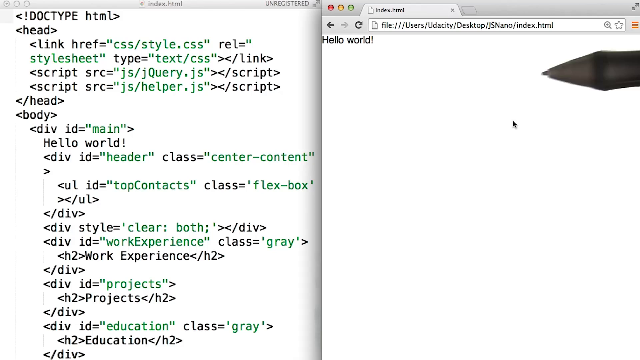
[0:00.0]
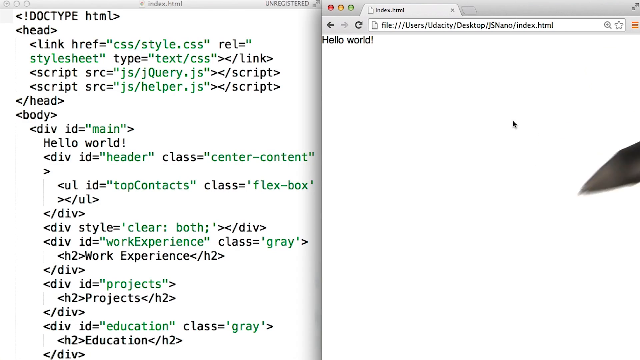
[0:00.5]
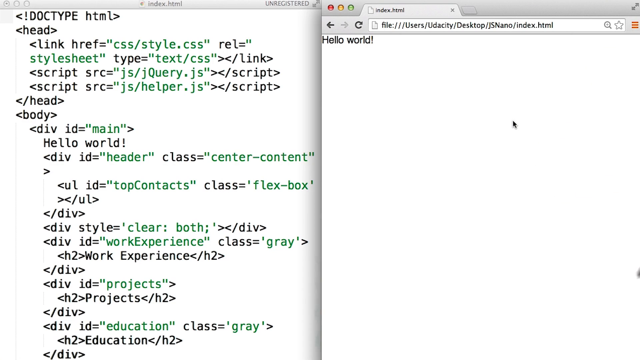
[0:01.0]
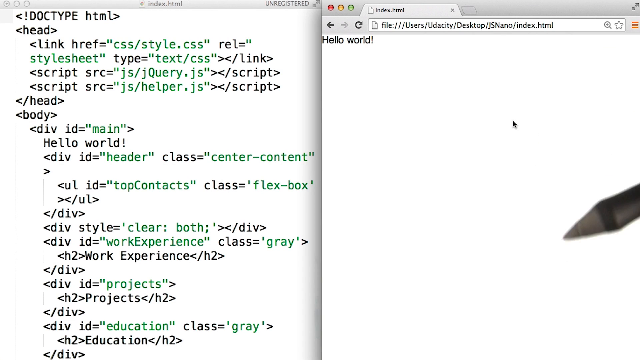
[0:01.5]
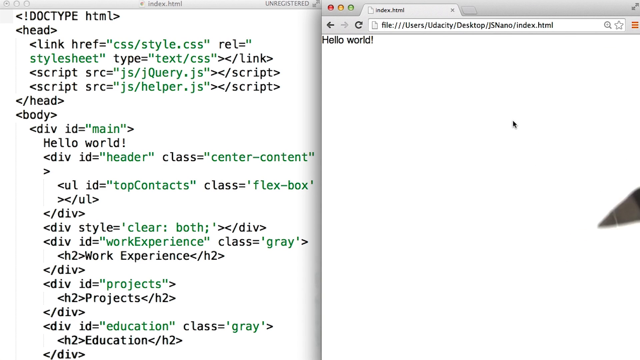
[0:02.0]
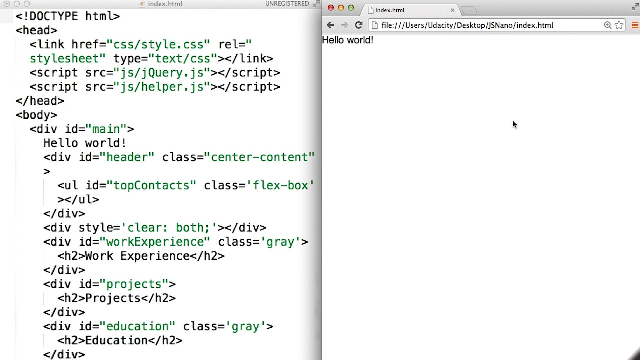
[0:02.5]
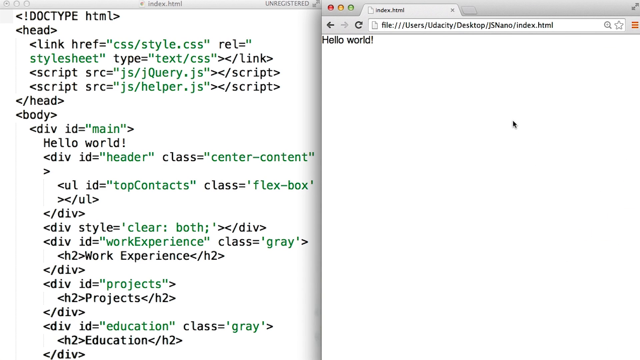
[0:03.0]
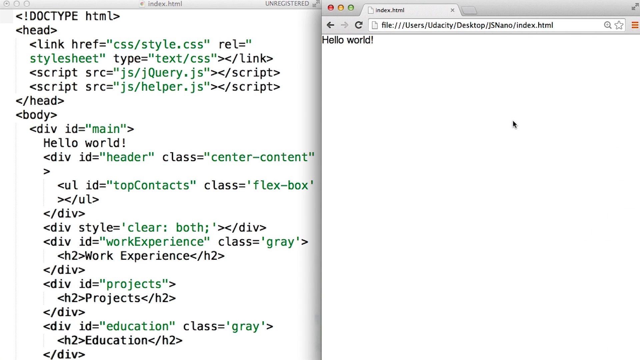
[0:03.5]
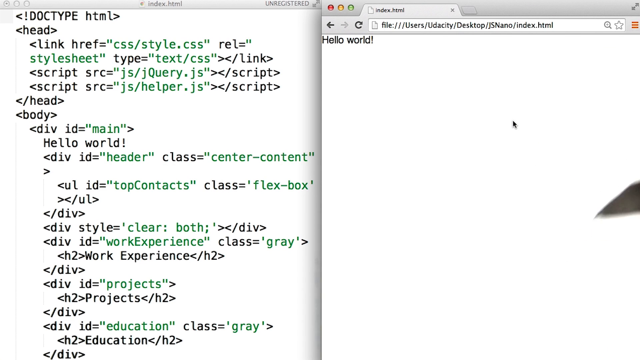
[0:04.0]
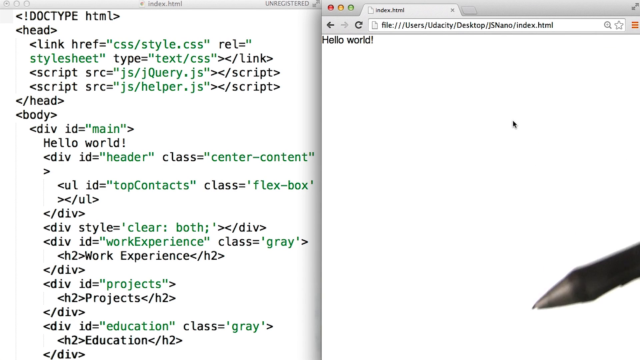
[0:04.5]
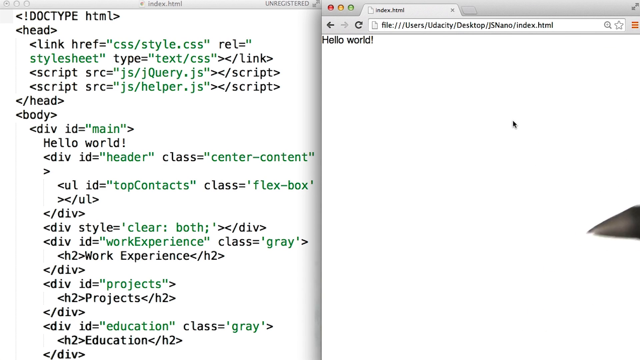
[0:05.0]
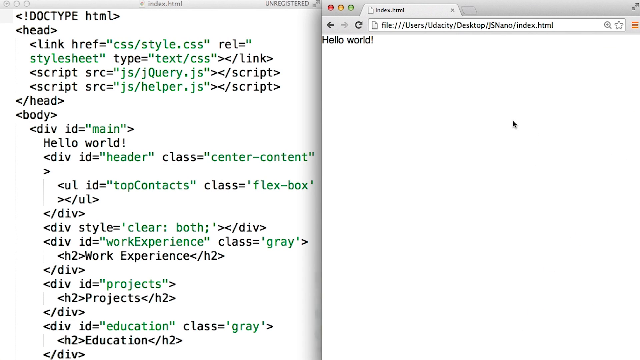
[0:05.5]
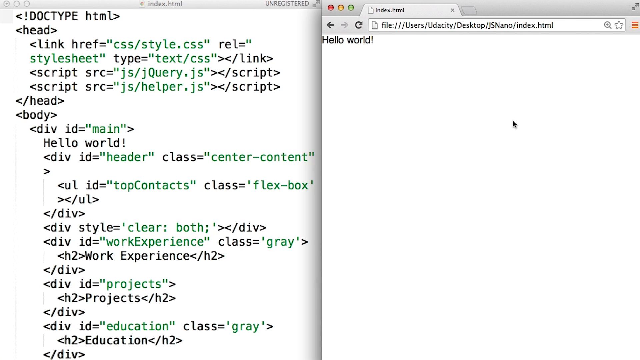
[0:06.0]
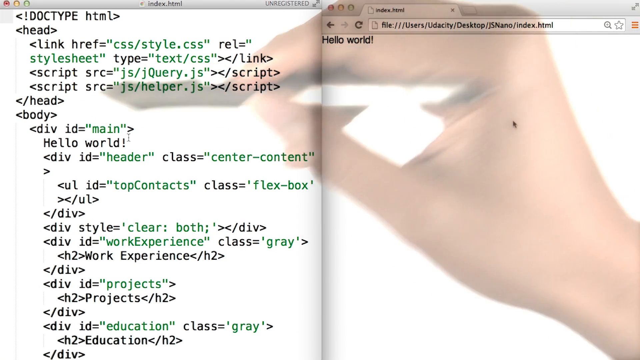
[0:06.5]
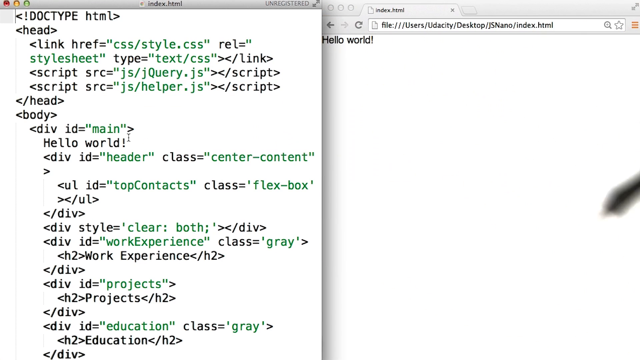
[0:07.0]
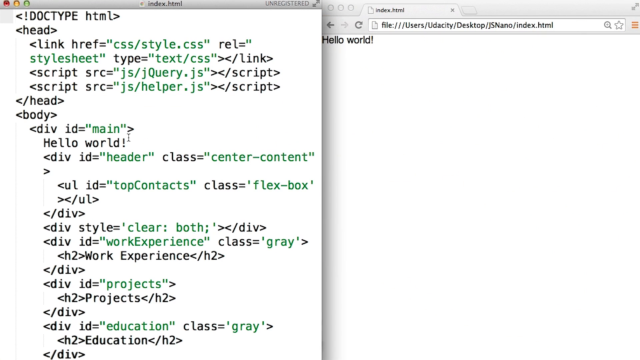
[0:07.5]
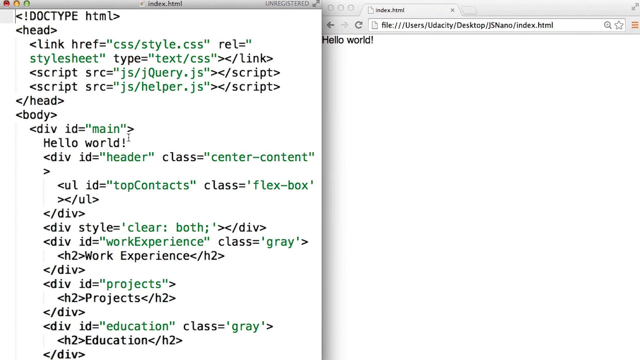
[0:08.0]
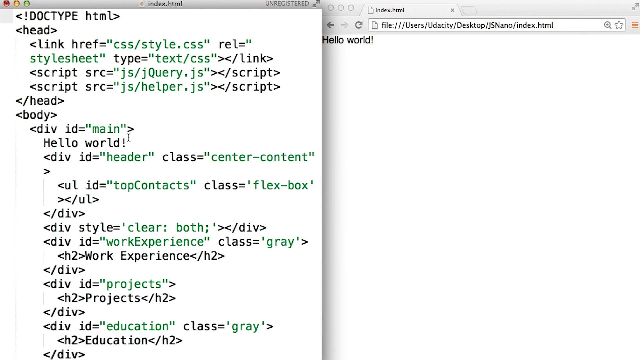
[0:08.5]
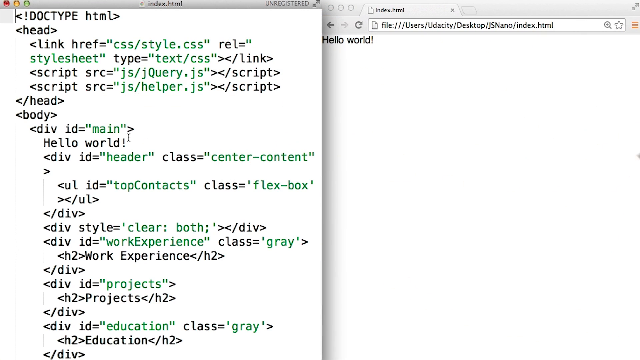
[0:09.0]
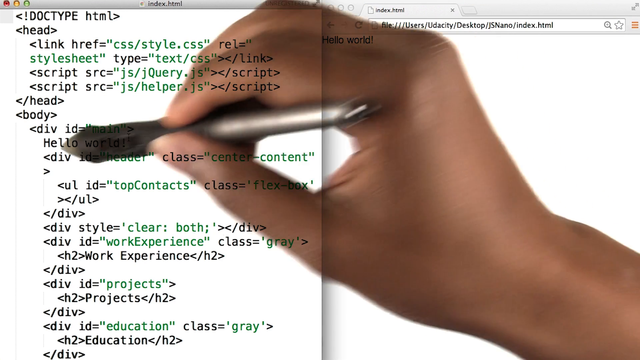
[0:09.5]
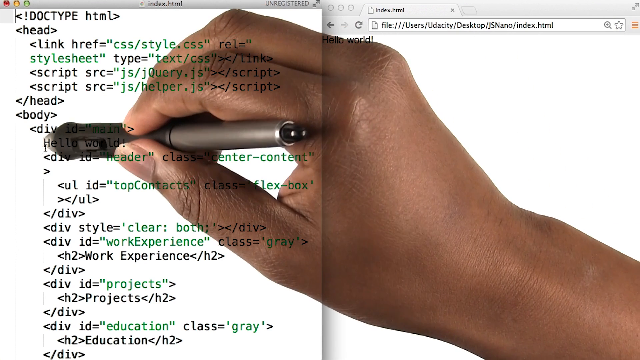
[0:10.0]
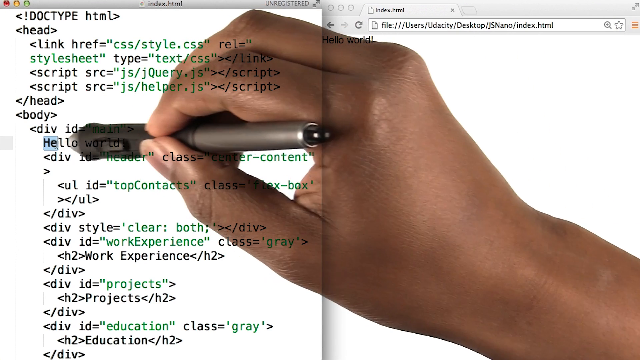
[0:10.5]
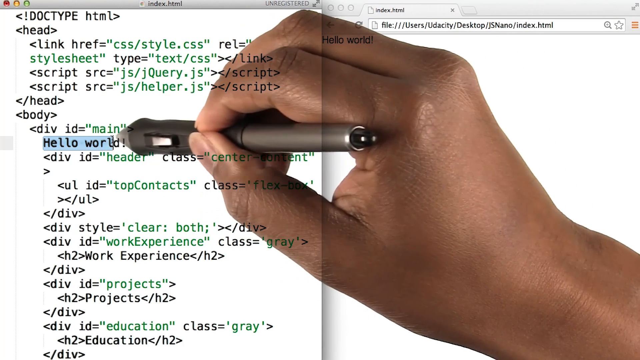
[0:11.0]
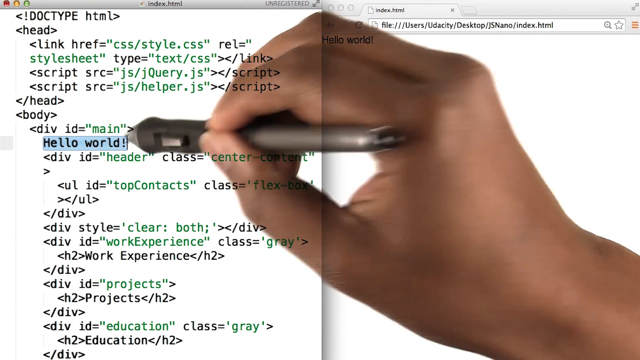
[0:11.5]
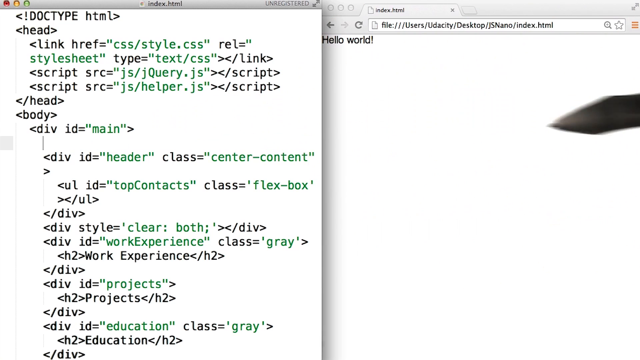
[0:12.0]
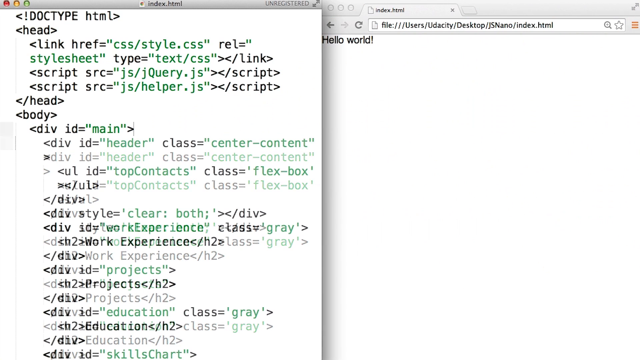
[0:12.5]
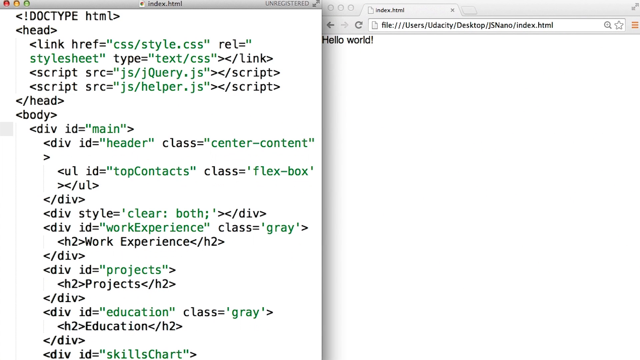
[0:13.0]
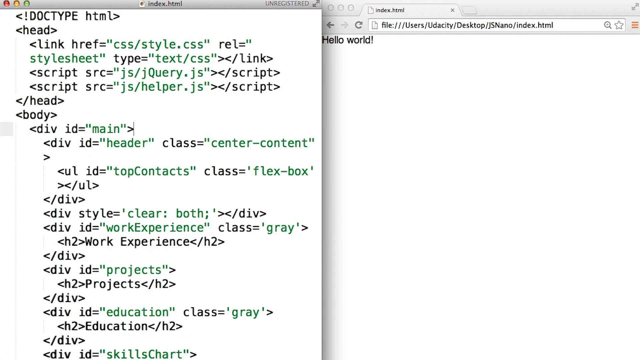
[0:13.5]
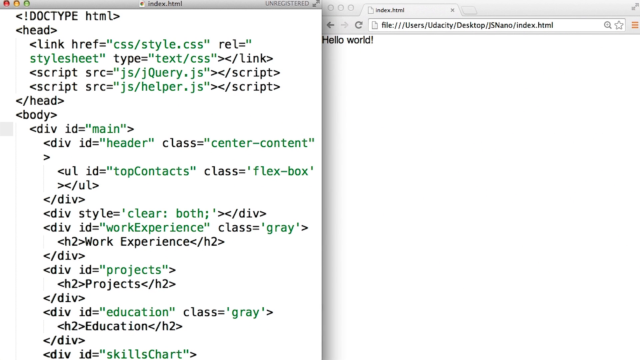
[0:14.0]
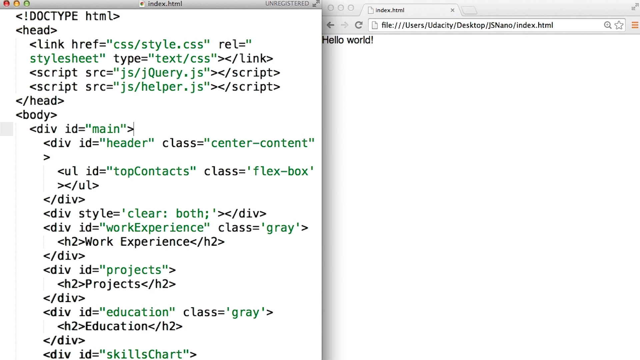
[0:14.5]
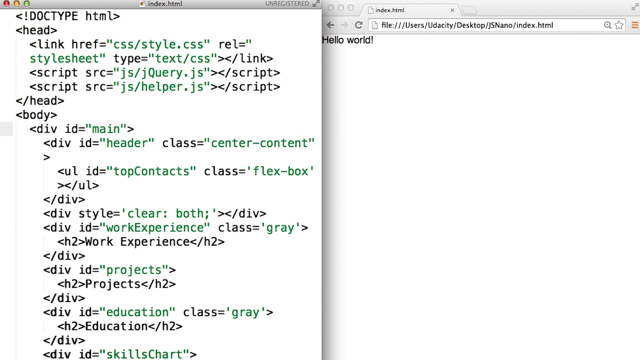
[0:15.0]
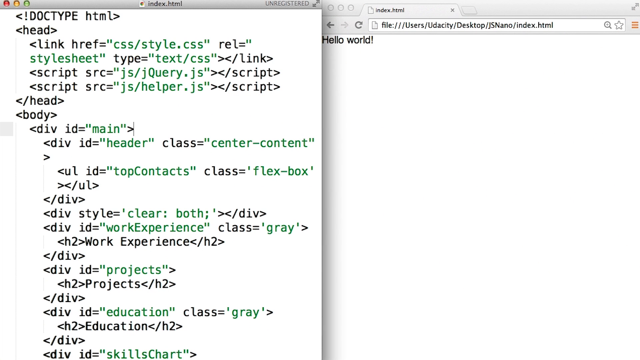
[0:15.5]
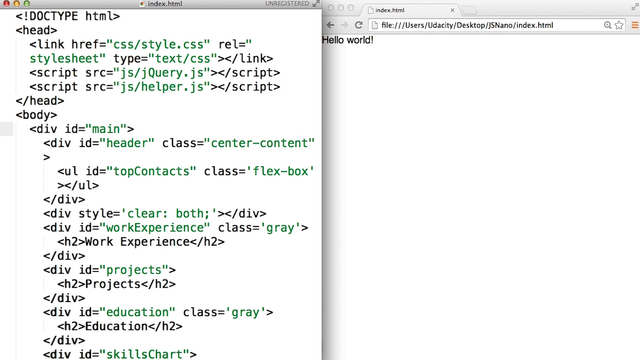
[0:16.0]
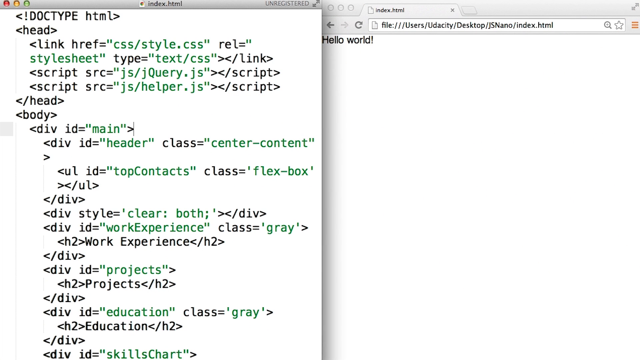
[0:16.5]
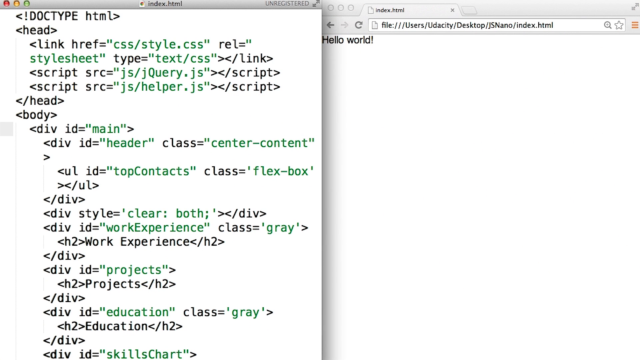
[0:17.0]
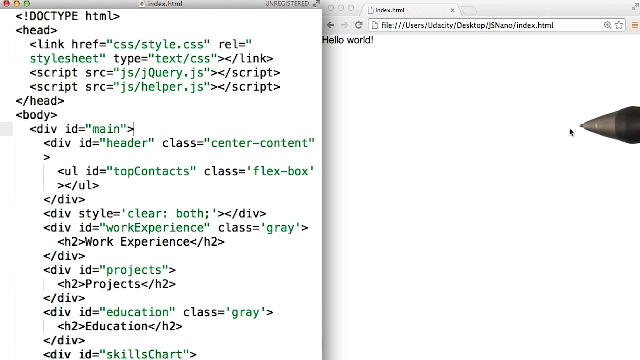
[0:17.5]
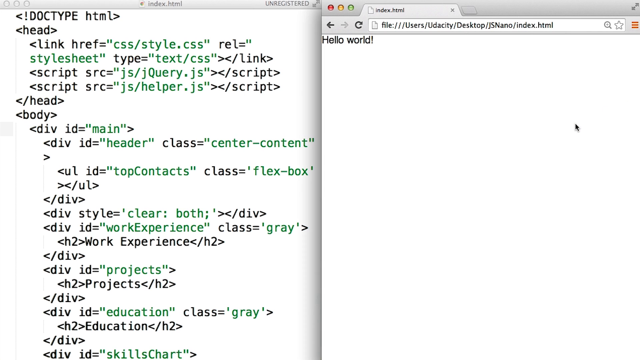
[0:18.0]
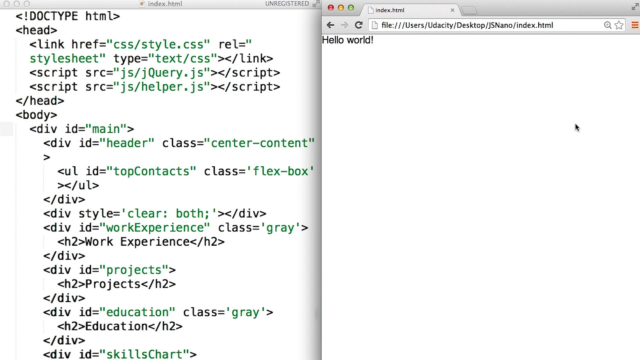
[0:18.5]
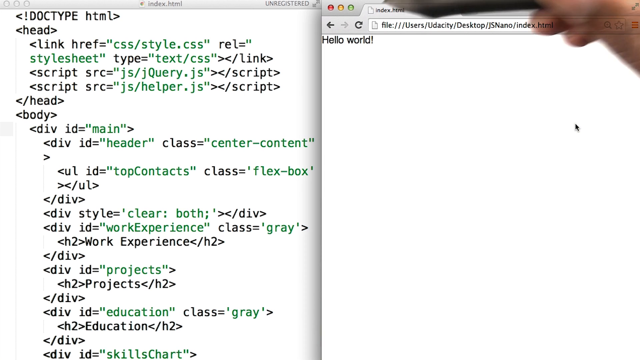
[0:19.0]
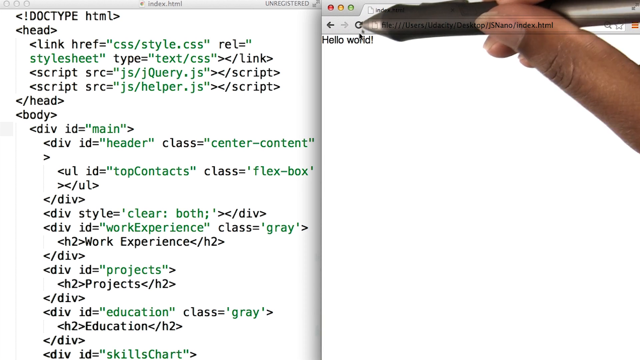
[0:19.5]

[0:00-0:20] A page with different words written on it is shown, and the video demonstrates how to remove some of the words. A person first opens another page next to the original one. He wants to remove the word "hello", so he highlights it and switches it to the other page. In the middle of the page are words such as "stylesheet" and "script", along with "hello world" and "class", which appear jumbled together. The words are split off and moved to the other, newly opened page.